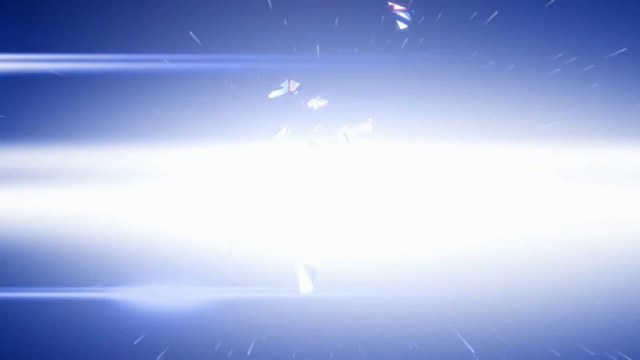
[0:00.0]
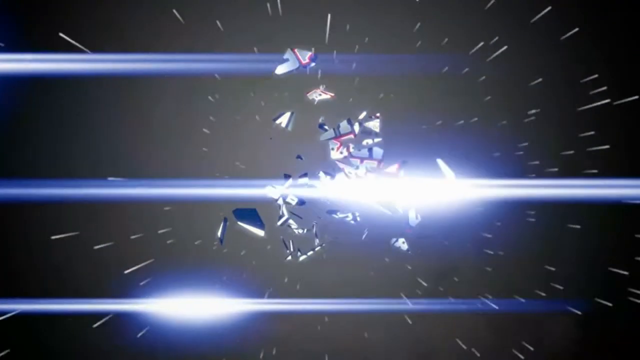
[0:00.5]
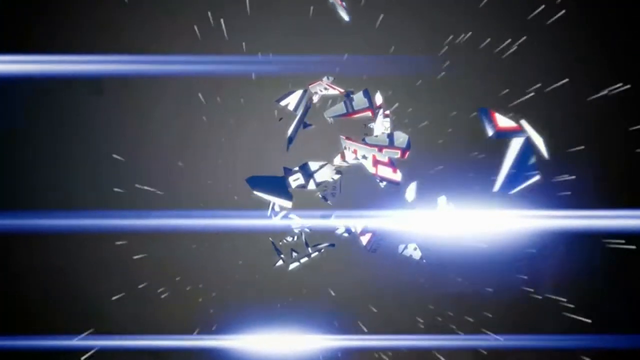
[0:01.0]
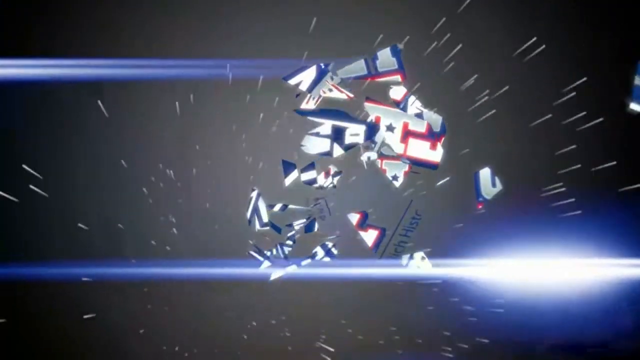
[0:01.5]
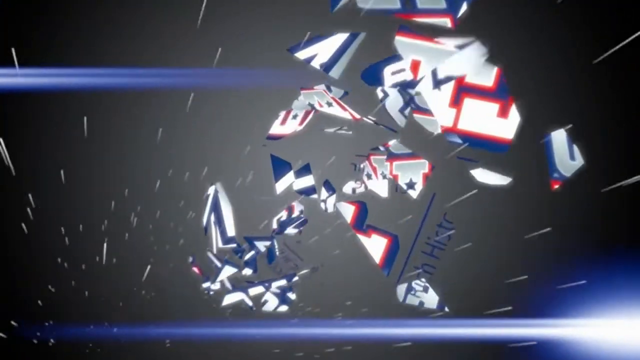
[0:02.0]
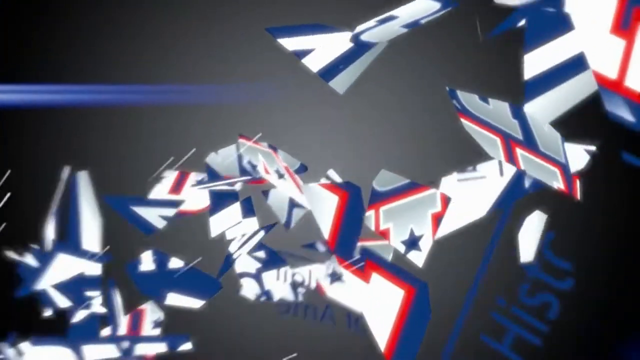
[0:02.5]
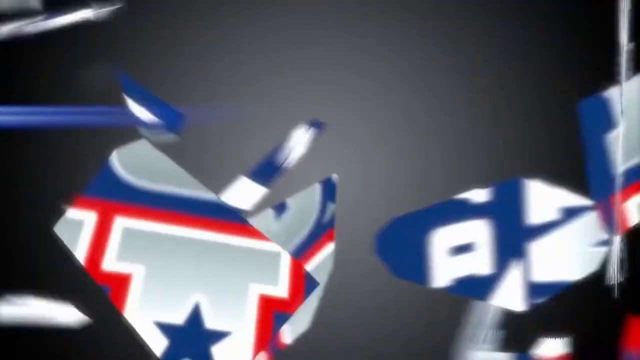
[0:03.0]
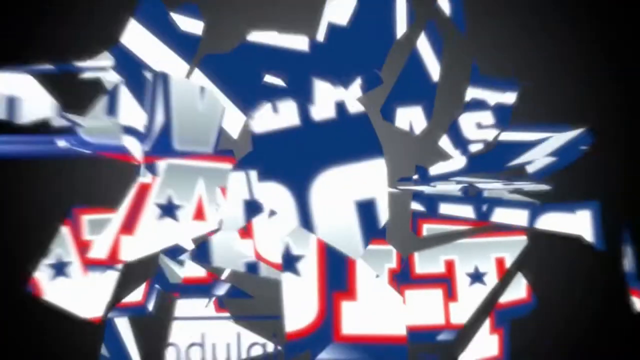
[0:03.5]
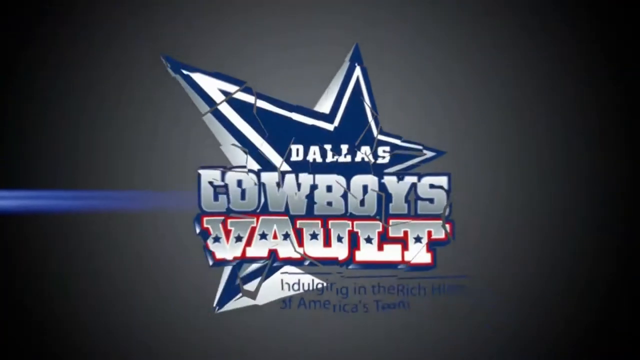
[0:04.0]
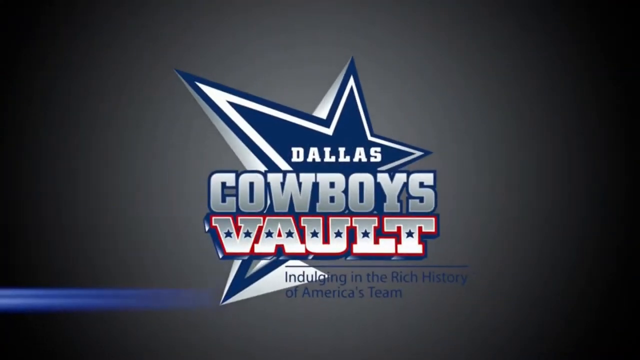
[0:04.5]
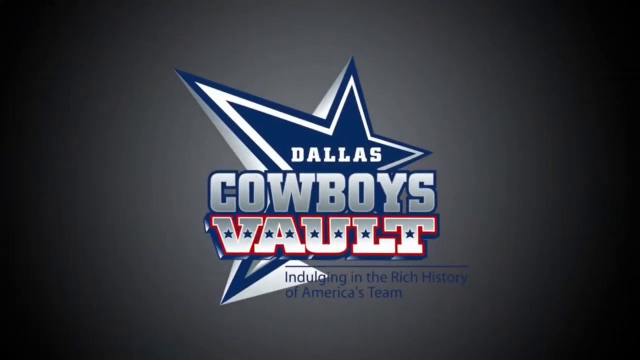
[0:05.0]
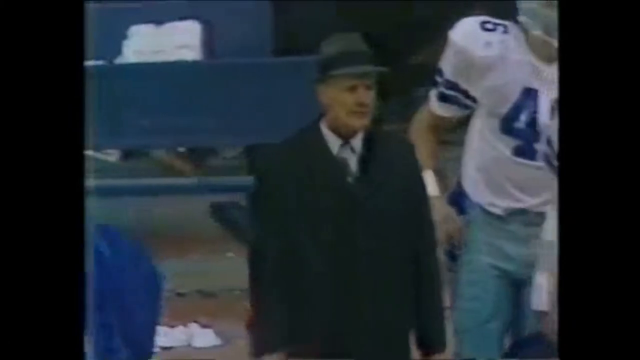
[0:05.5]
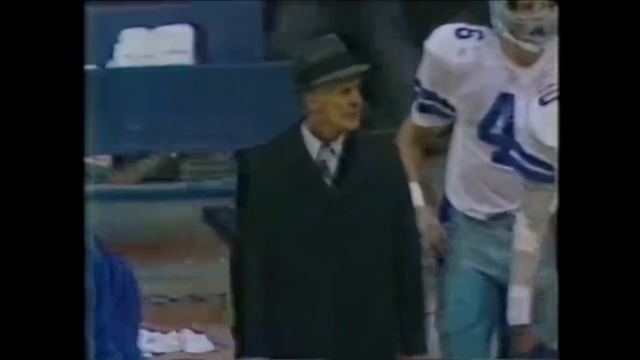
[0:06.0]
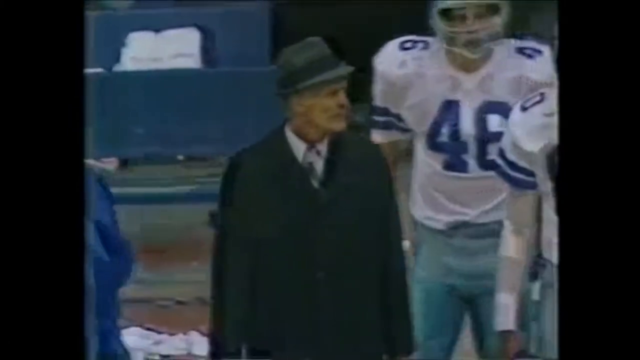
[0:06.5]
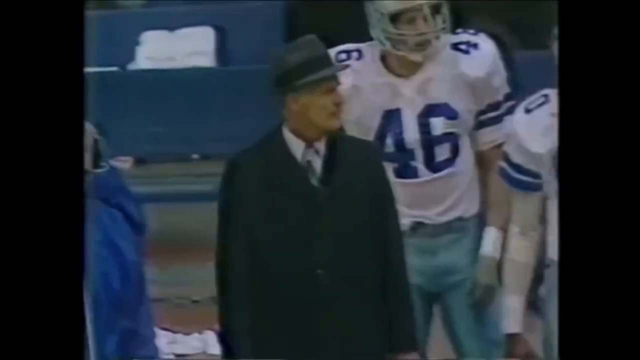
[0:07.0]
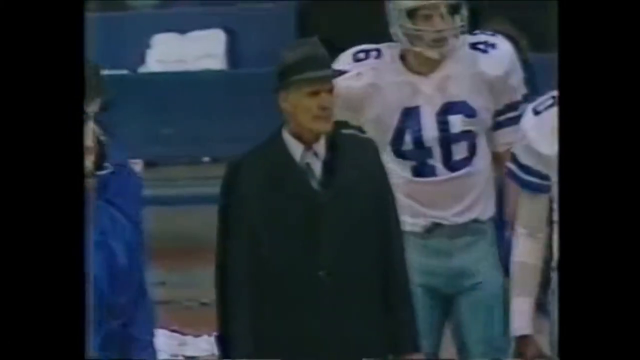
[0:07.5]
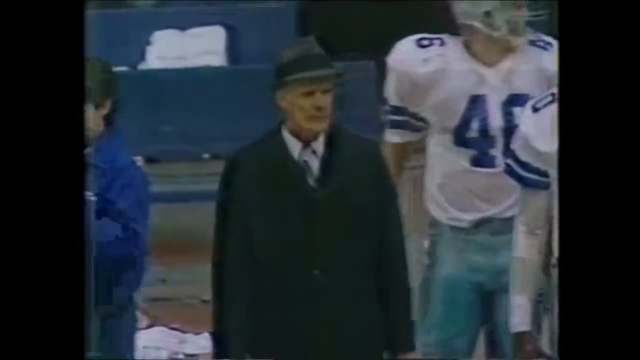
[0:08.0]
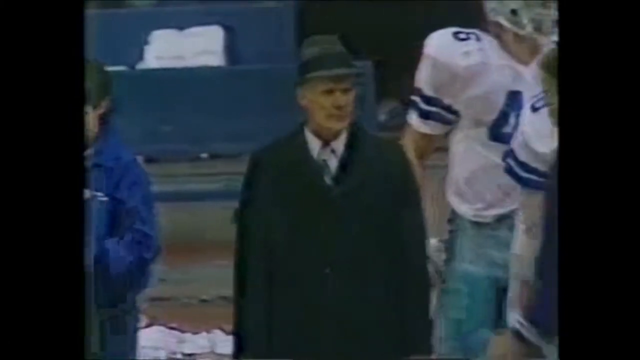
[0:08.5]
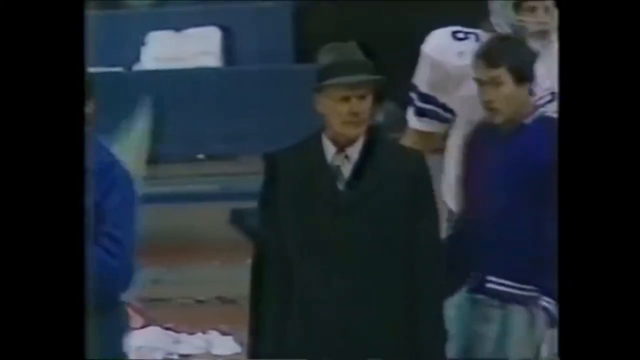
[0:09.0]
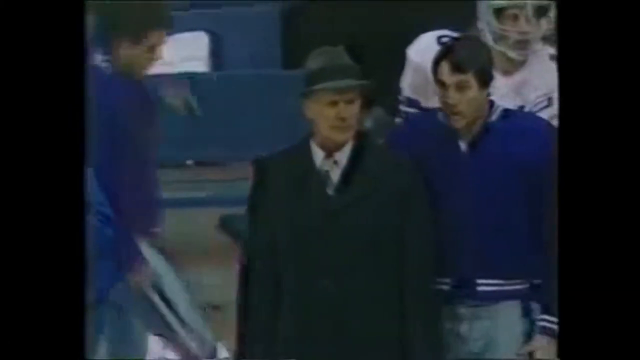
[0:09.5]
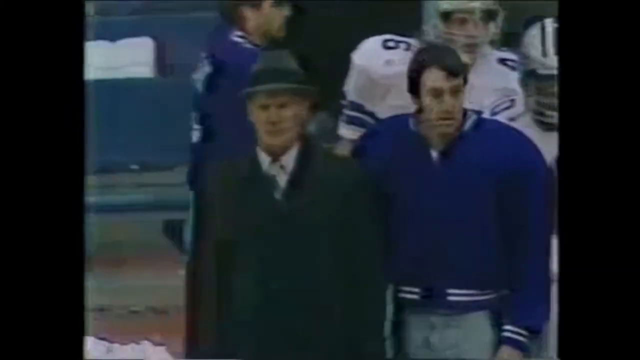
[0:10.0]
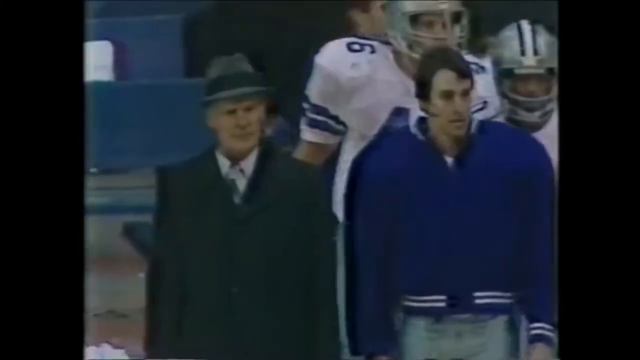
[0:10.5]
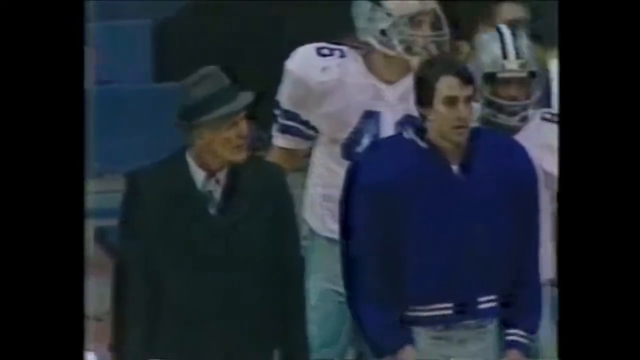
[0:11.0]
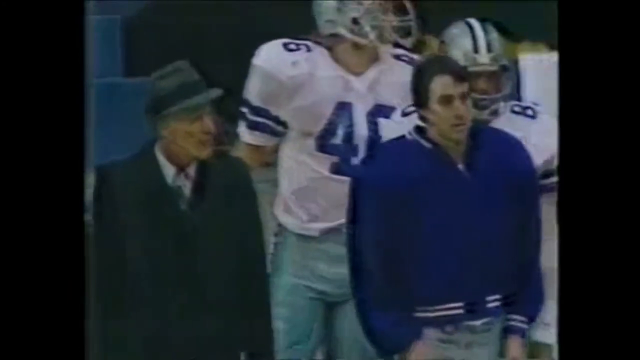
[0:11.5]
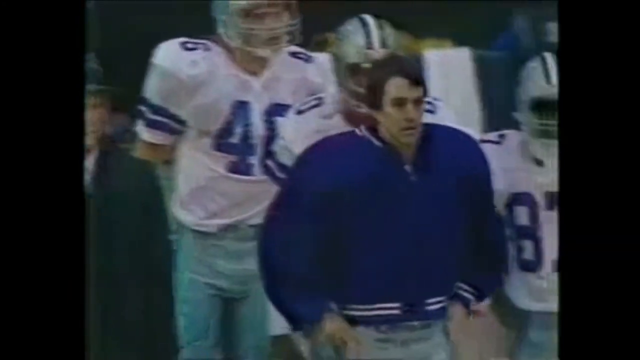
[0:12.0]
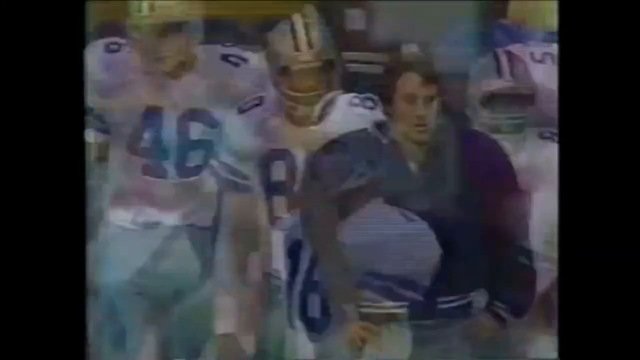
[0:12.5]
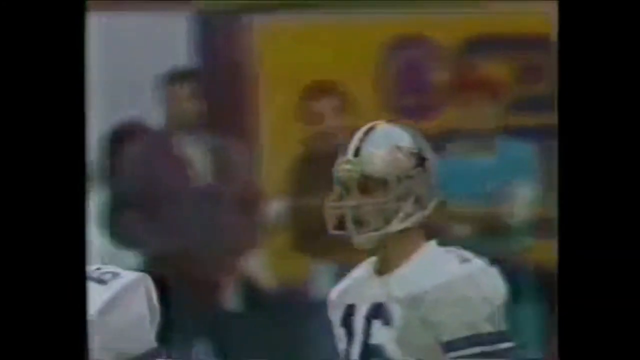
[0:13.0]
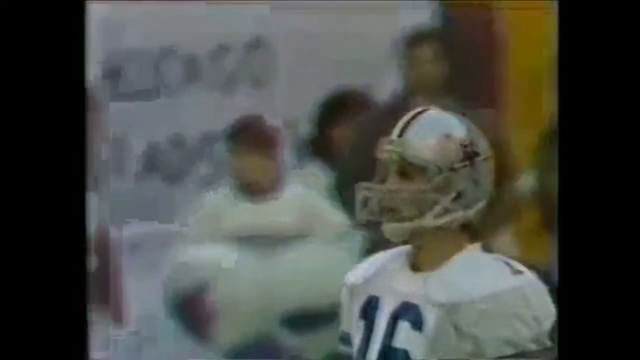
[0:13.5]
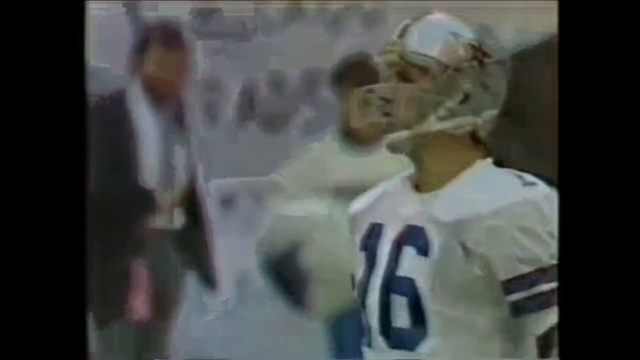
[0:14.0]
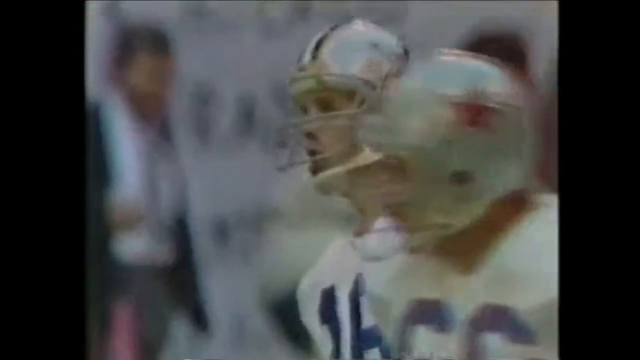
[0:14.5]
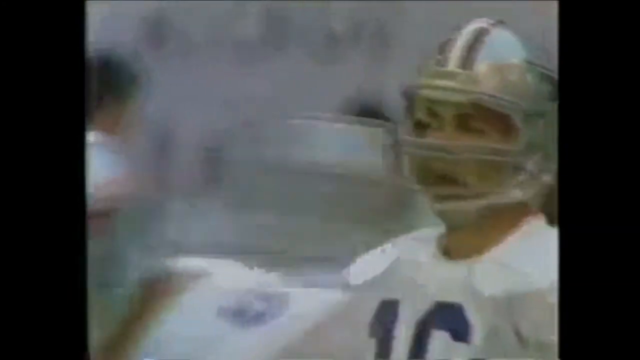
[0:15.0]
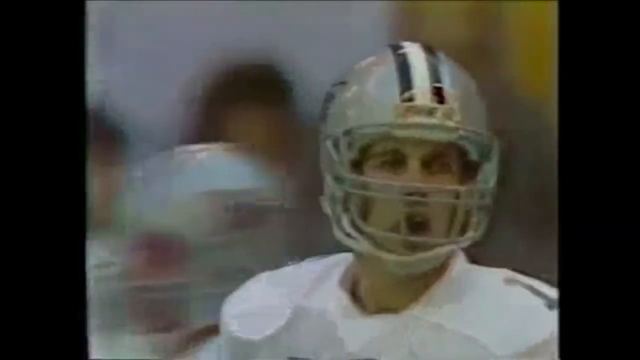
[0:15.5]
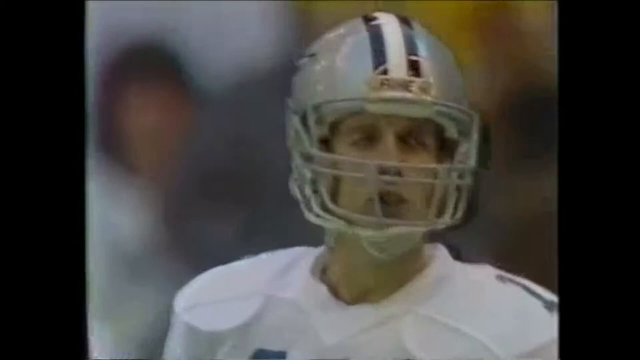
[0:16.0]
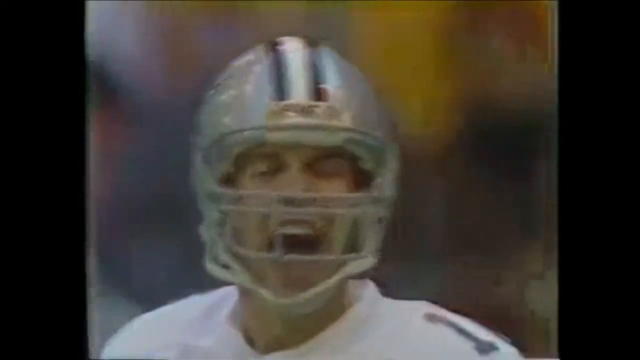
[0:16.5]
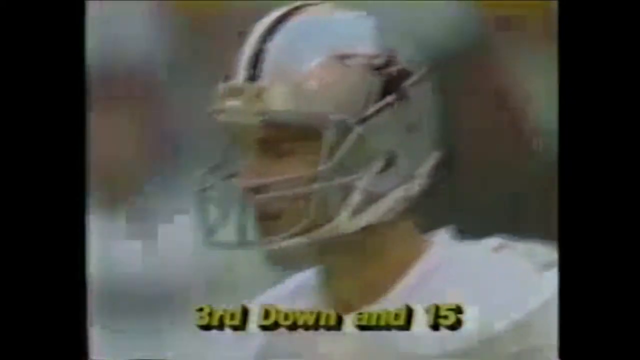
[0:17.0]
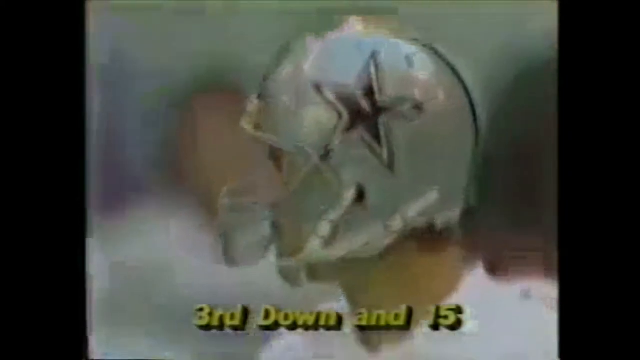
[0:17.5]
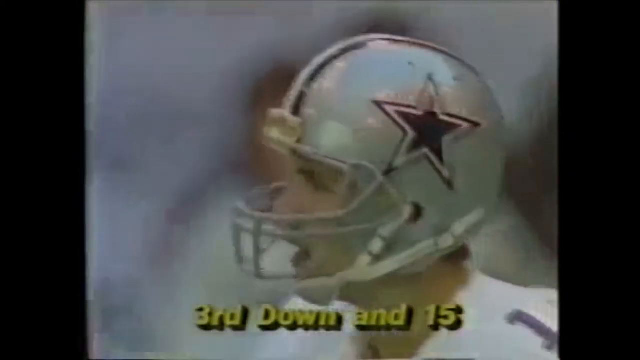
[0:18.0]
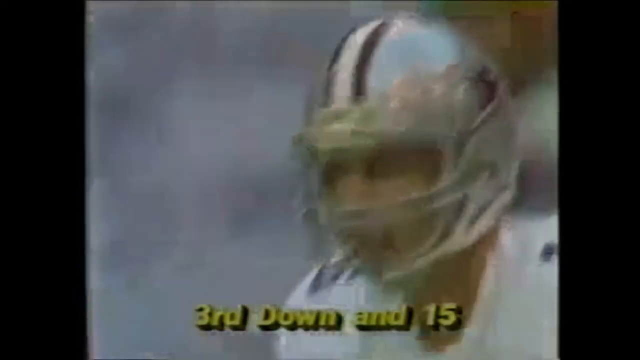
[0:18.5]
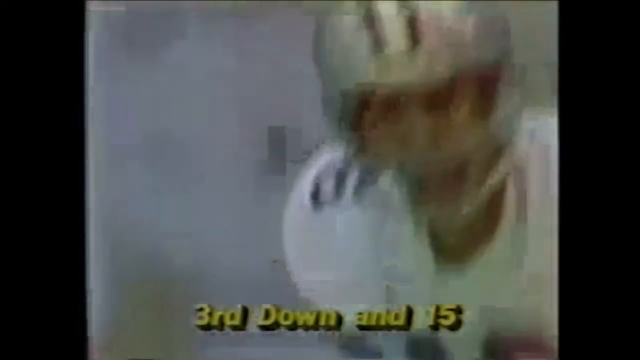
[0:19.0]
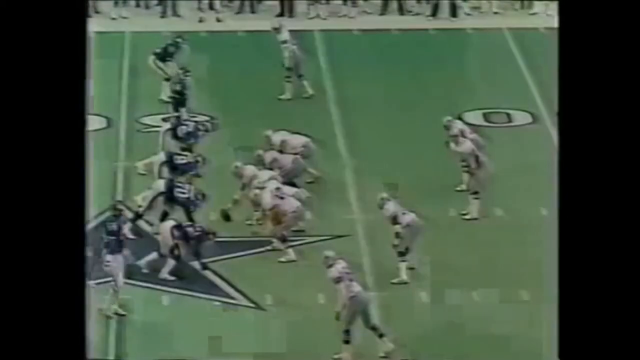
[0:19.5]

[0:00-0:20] The video opens on a bright blue title screen with bright lights running horizontally across it. Something appears to have shattered and is being brought back together, sort of puzzle-piece style, in very jagged pieces. This happens quickly: the background turns dark and the pieces come together to form a large blue star with a white outline. Text over it reads "Dallas Cowboys Vault." Smaller text underneath, hard to read on its black background, reads "Indulging in the rich history of America's team." The screen then changes to very old footage of a football game, probably from the 70s, showing the sidelines. An older man there wears a gray fedora with a black band and a dark trench coat. Next to him on the field are players in Cowboys uniforms, white with blue lettering, and to the left of the man in the overcoat are some people wearing blue windbreakers. An image of players on the field follows, in which player 16 yells very loudly. Next, "3rd down and 15" appears on the screen.